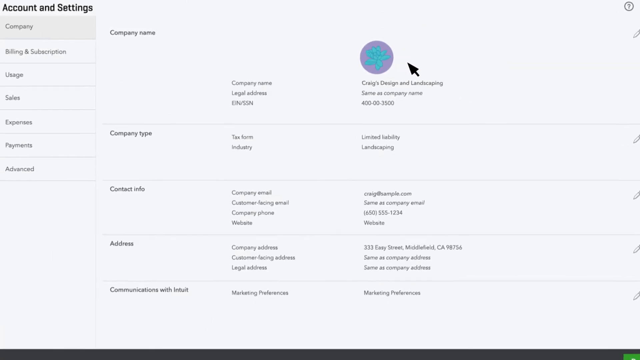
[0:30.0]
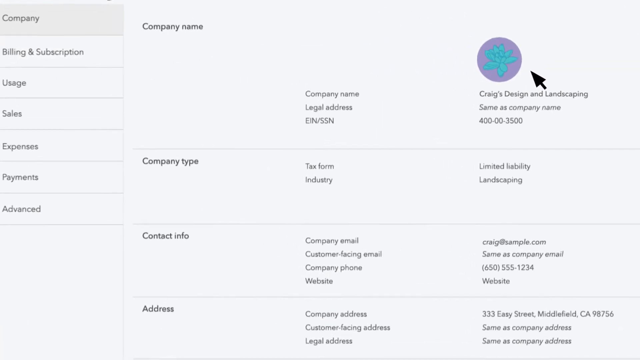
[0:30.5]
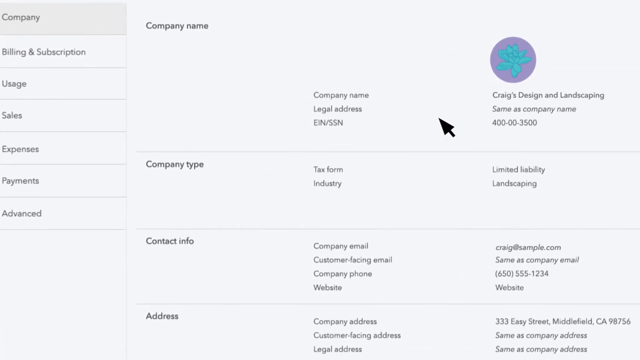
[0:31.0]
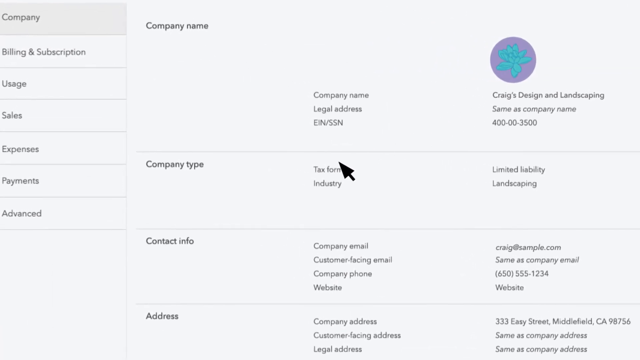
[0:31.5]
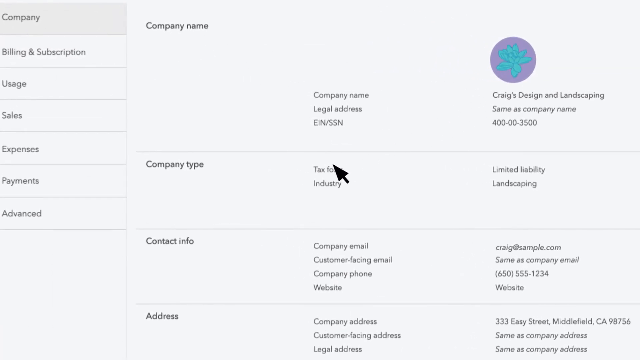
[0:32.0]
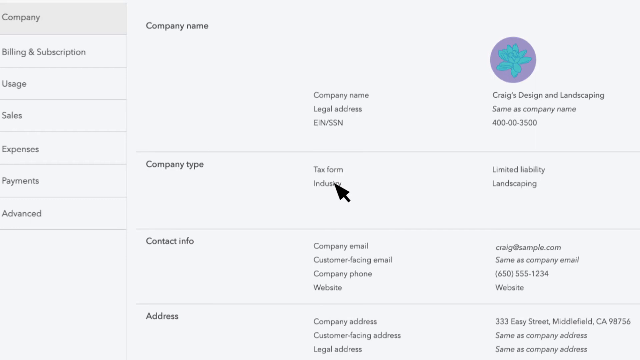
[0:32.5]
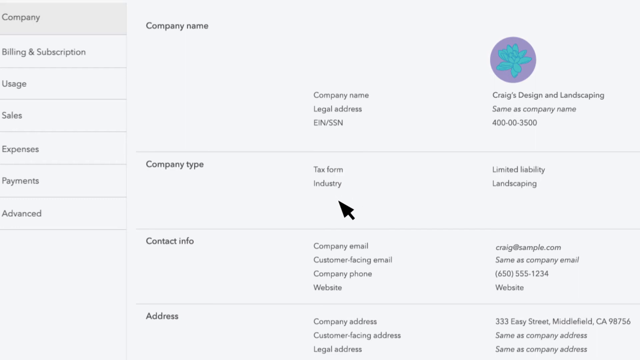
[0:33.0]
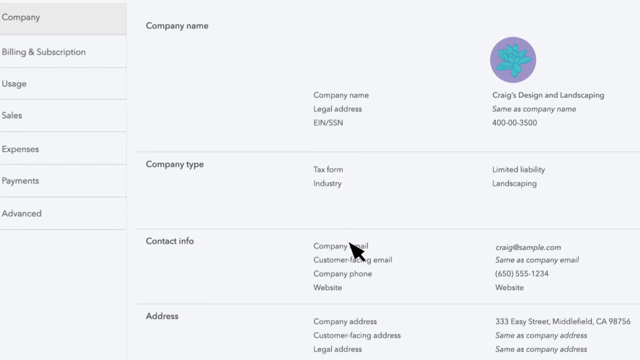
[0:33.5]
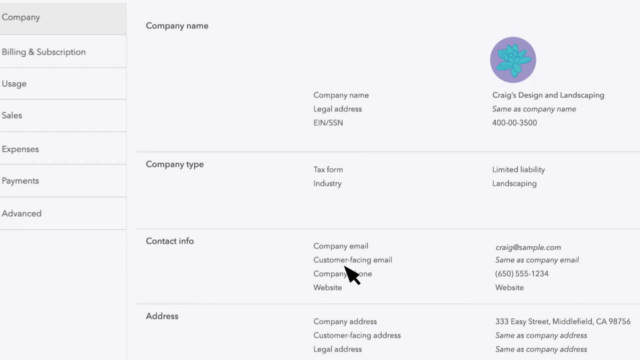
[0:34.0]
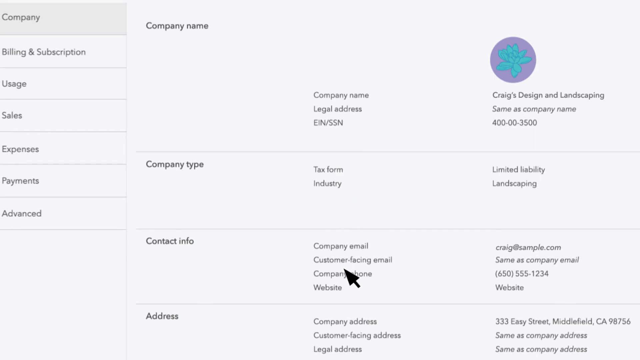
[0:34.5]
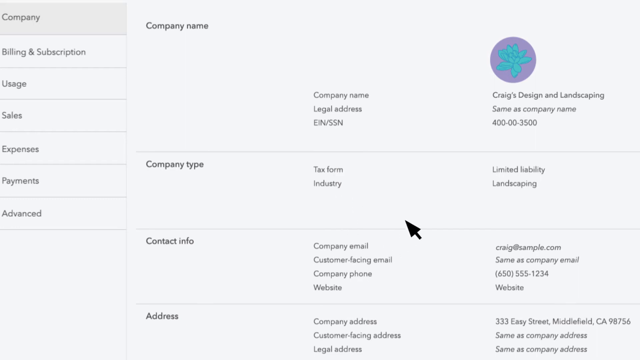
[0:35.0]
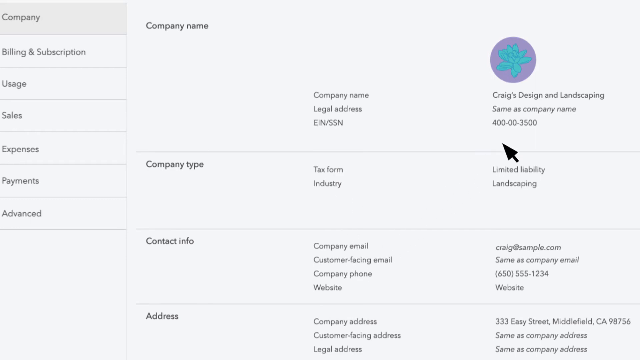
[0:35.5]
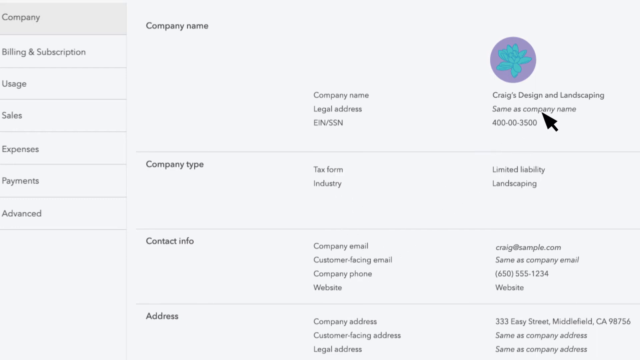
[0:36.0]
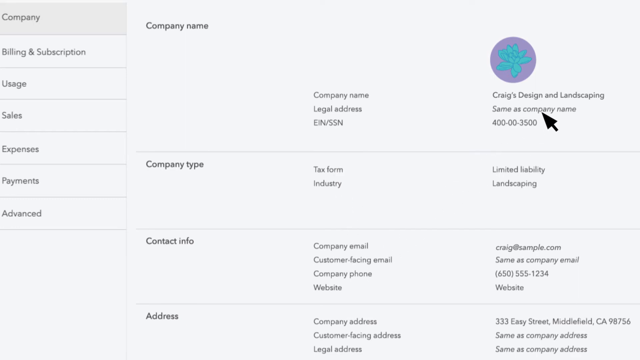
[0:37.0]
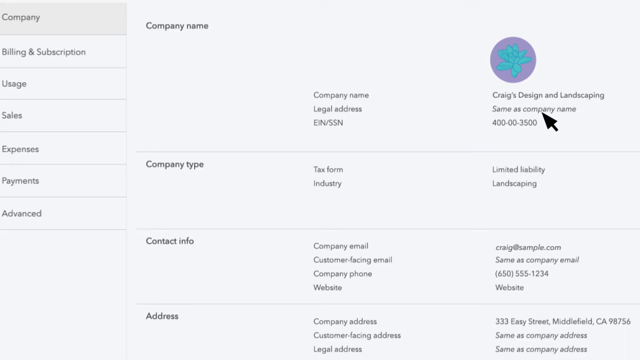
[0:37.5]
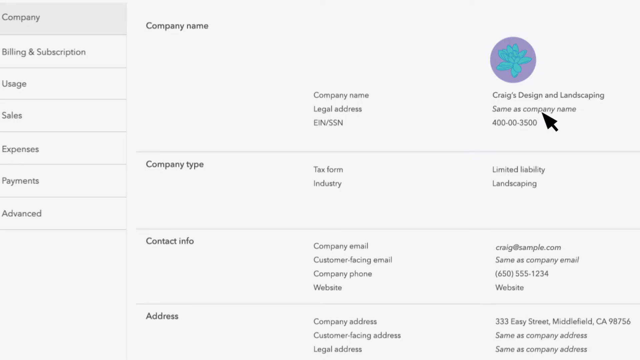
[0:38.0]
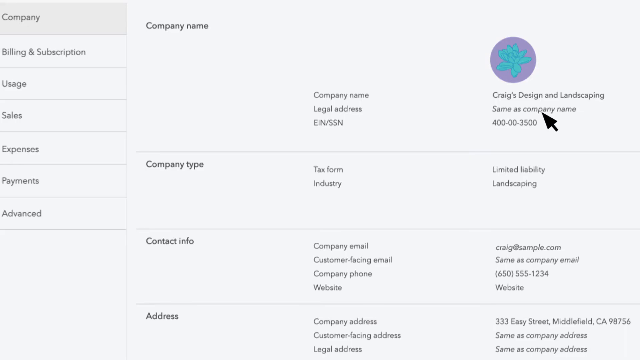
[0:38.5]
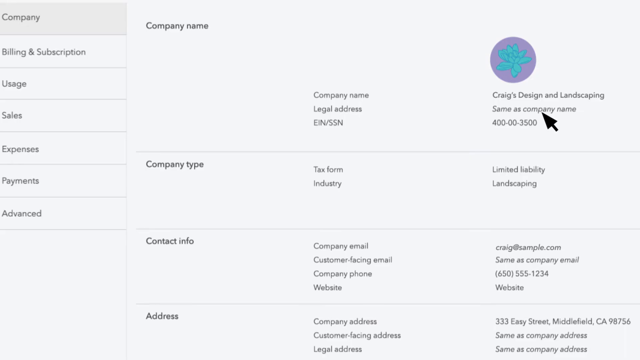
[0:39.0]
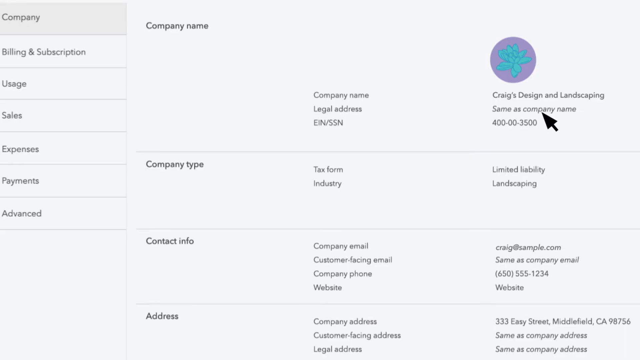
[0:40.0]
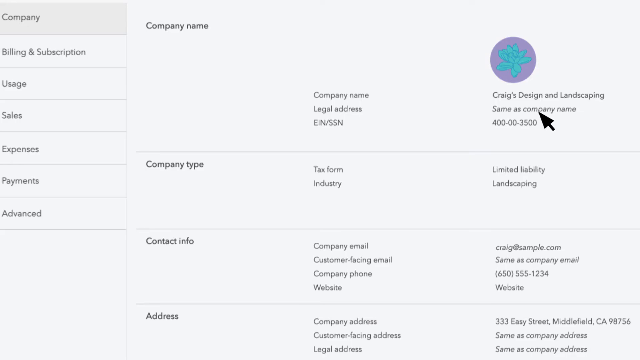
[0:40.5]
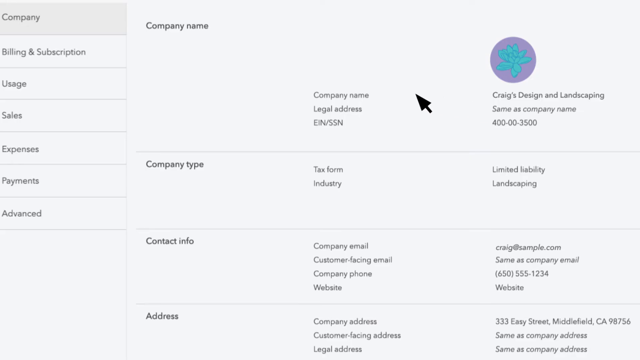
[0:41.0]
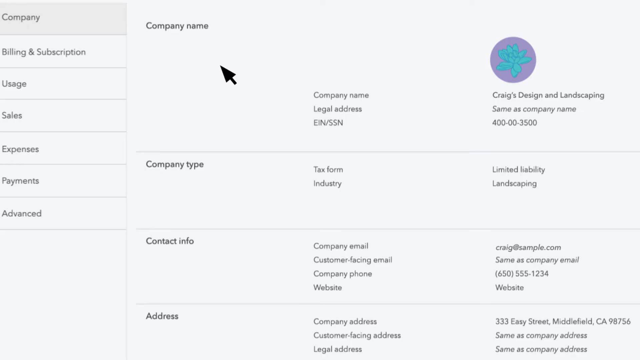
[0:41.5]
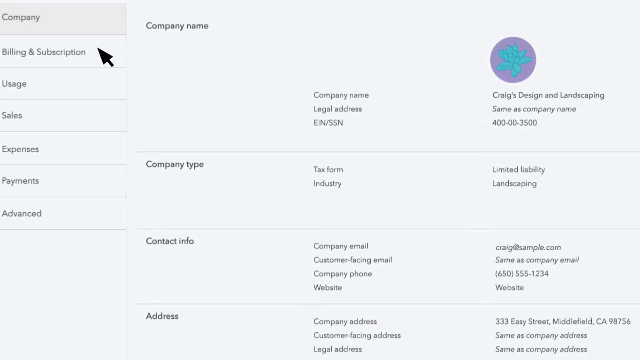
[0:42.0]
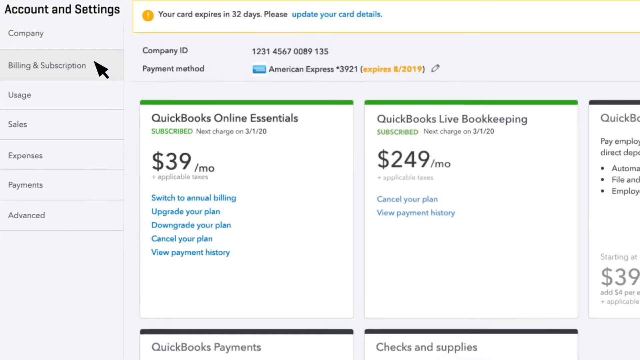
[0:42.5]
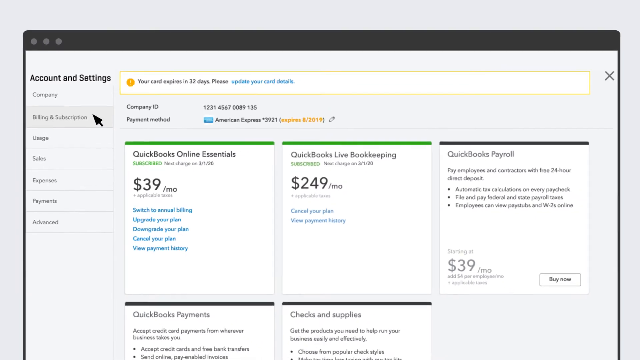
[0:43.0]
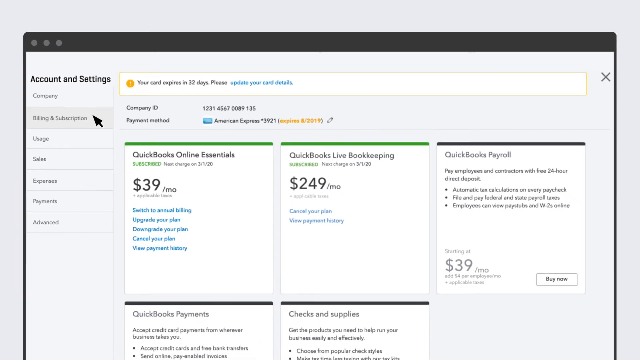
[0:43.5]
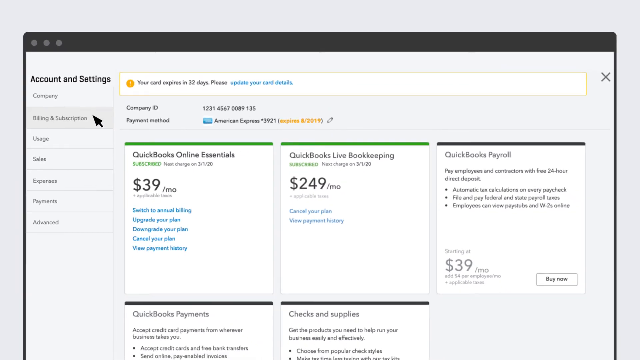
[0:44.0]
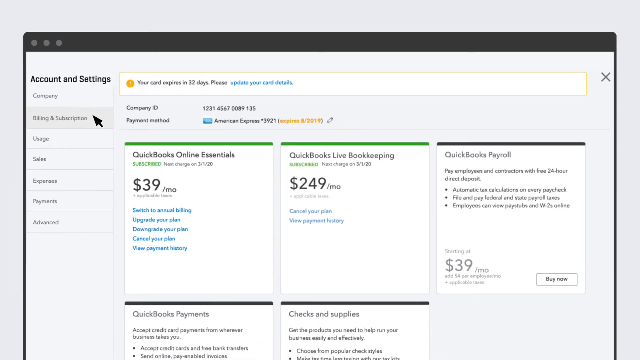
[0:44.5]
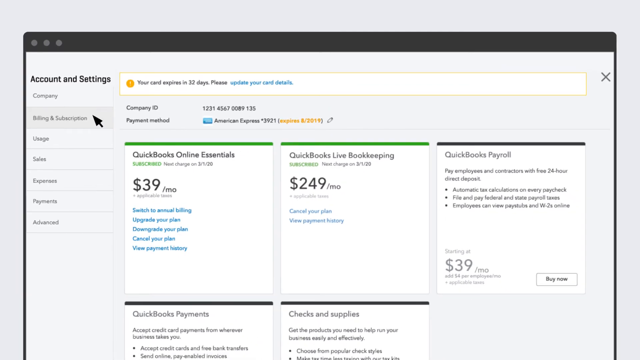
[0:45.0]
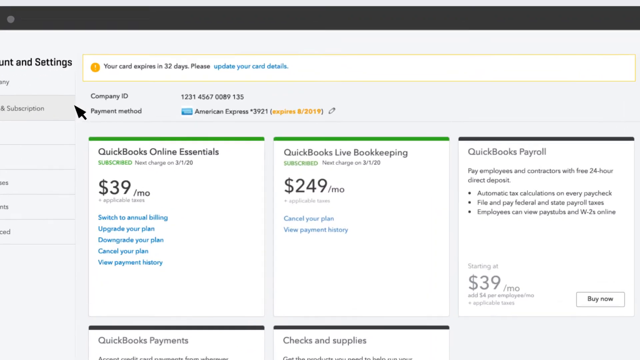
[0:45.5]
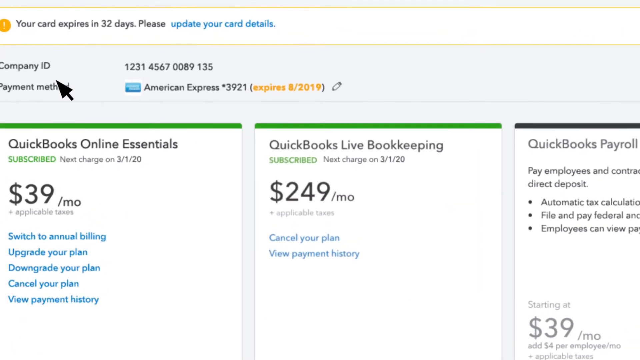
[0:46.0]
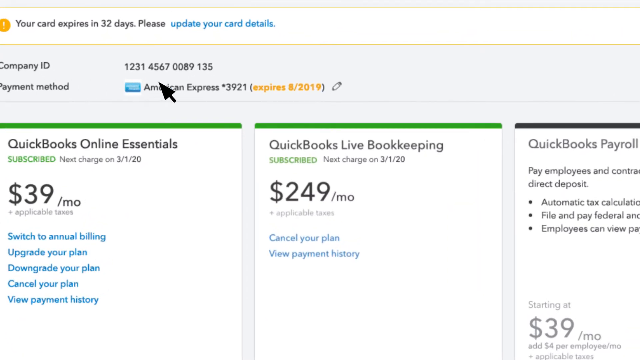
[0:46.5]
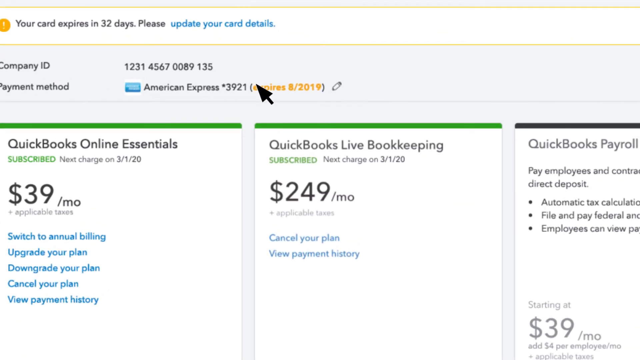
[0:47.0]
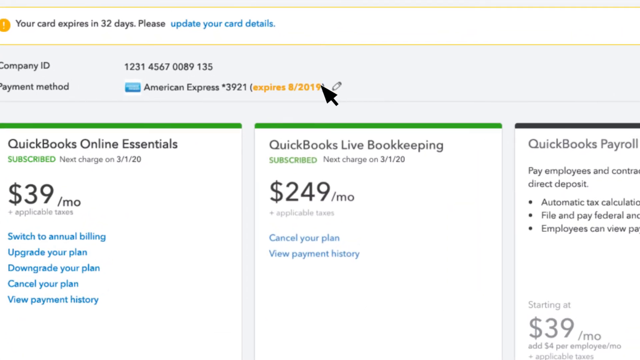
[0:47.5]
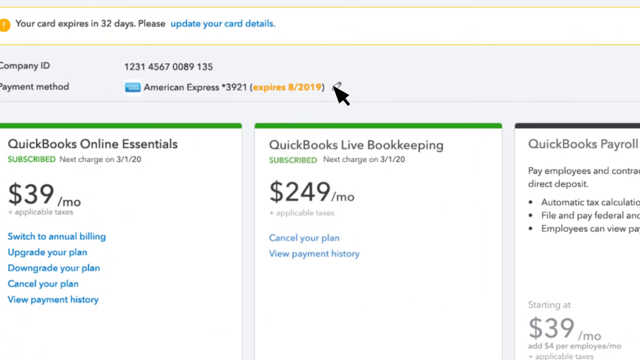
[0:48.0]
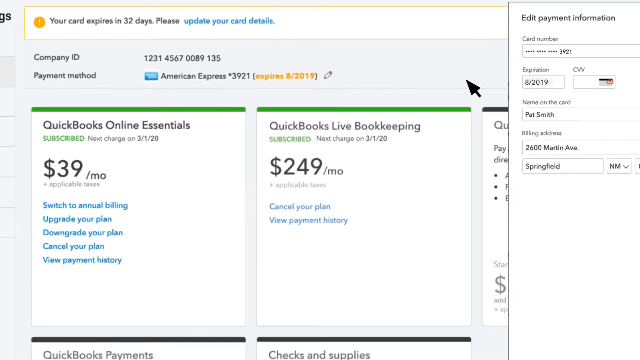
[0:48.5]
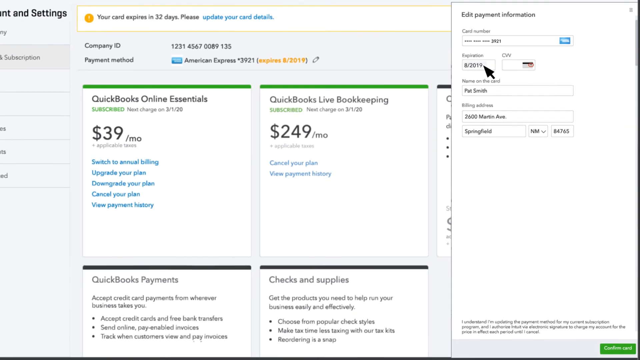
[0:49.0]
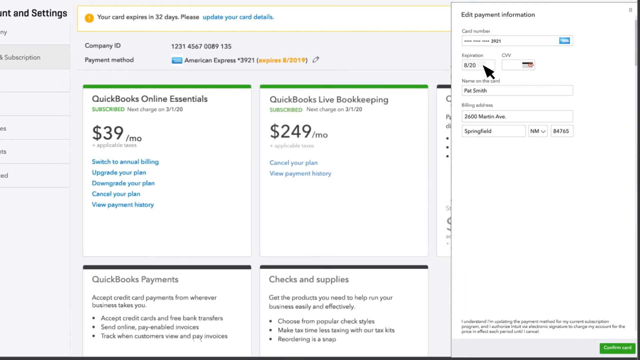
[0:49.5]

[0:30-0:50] One of the opened pages shows account settings, and an arrow navigates around it. It narrows down to the company type, the contact information, the address, and billing and subscription. A column lists usage, sales, expenses, payments and advanced. The page also shows the company name, the legal address, the company email, and the name Craig's design and landscaping. It then opens to show the account, the company ID and an option to edit, along with a panel that reads "QuickBooks online essentials" and "QuickBooks life bookkeeping". The arrow demonstrates how a user navigates around the page and goes about editing on the website.